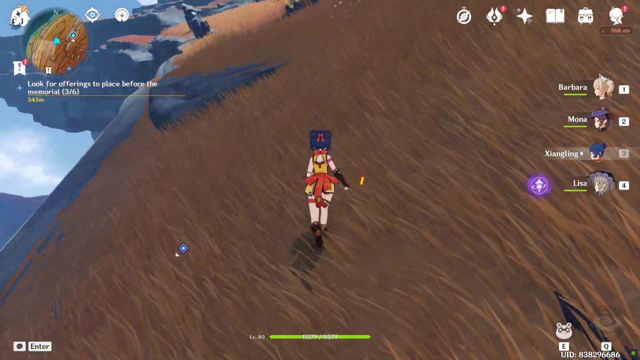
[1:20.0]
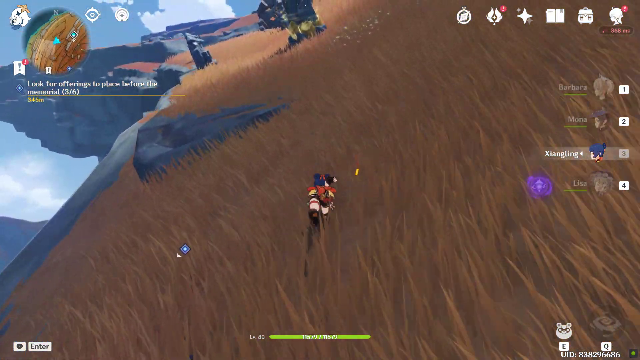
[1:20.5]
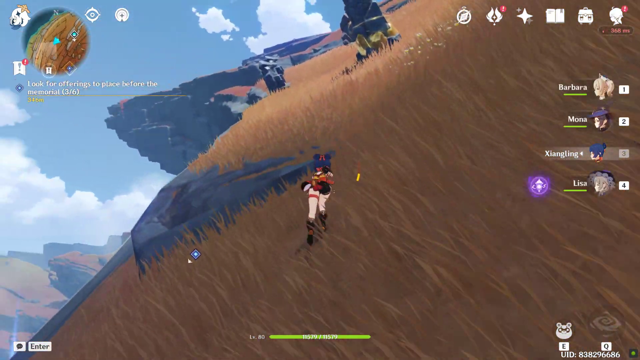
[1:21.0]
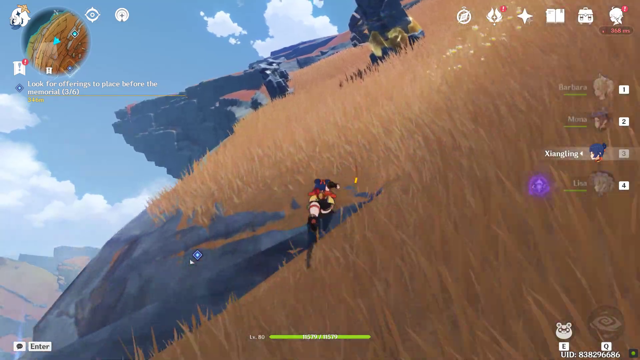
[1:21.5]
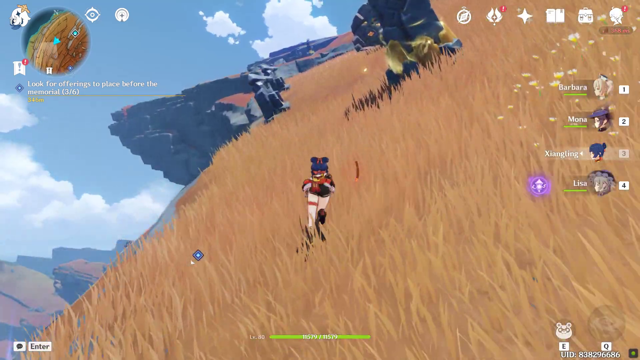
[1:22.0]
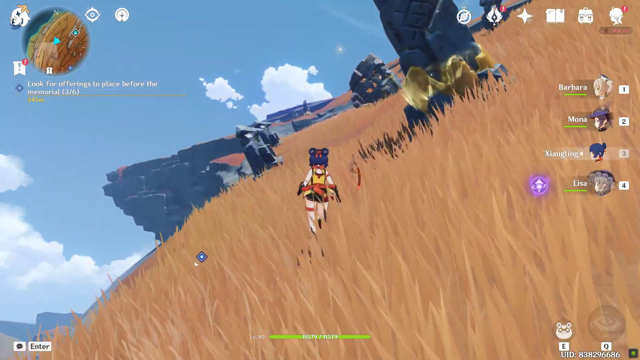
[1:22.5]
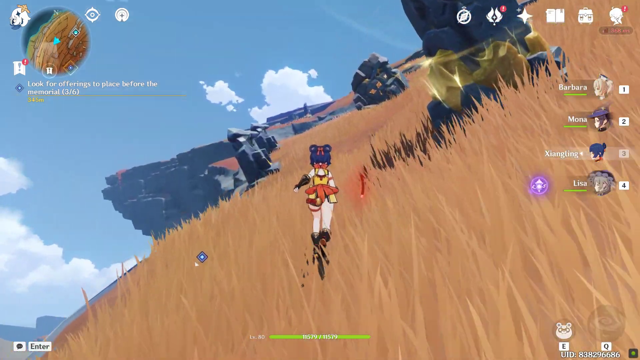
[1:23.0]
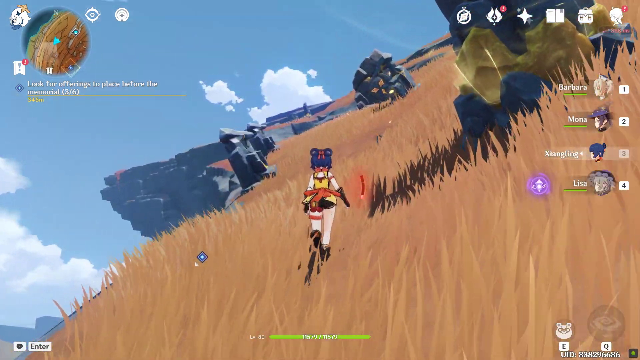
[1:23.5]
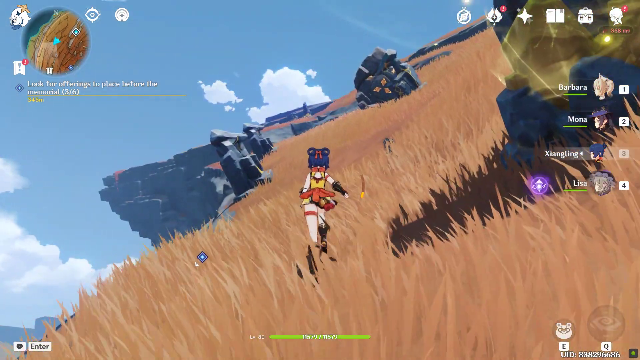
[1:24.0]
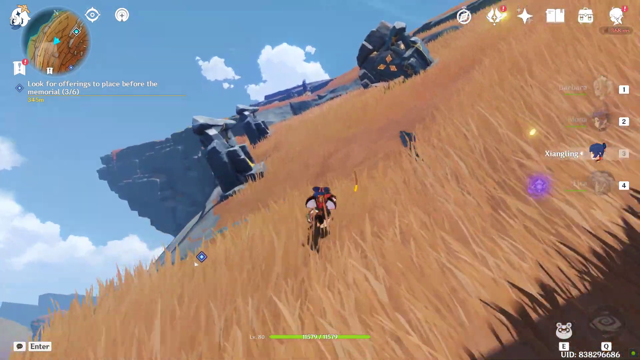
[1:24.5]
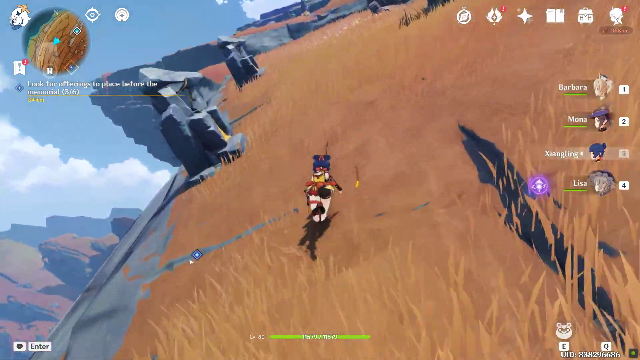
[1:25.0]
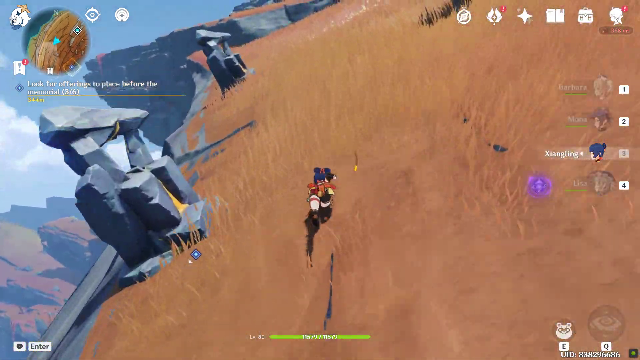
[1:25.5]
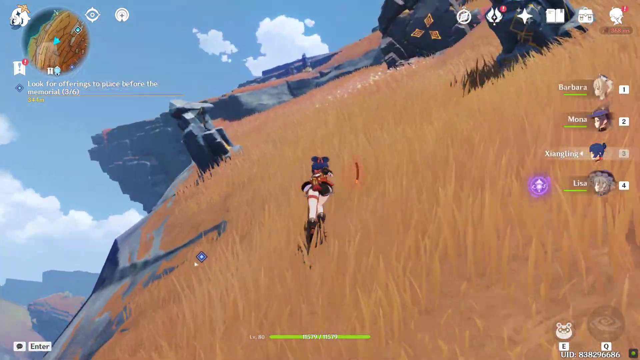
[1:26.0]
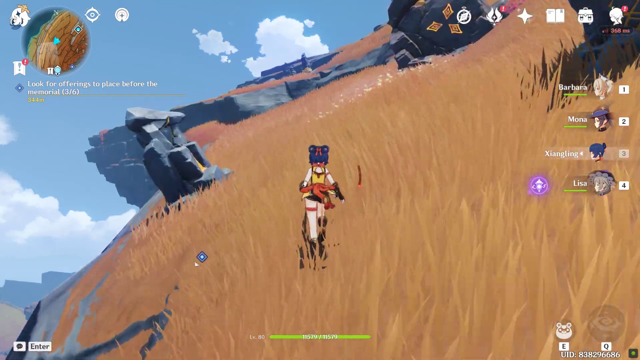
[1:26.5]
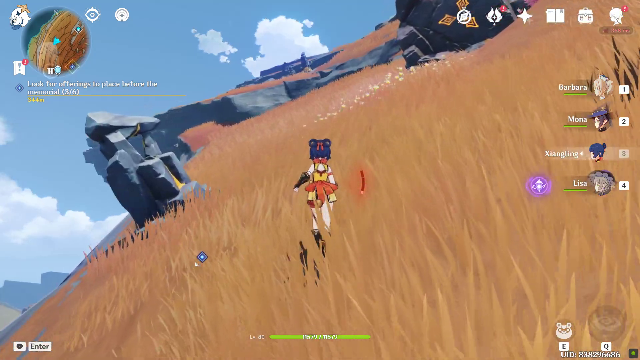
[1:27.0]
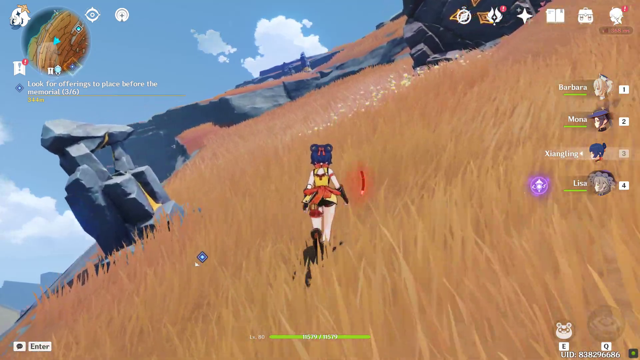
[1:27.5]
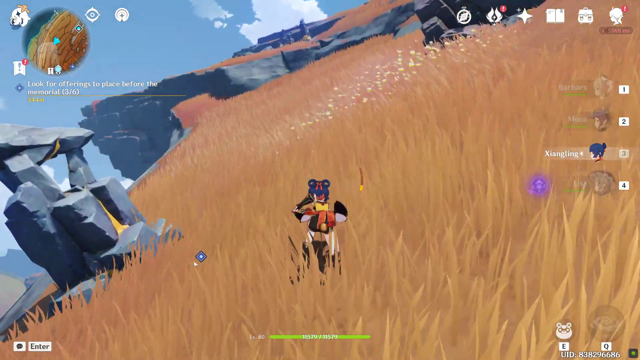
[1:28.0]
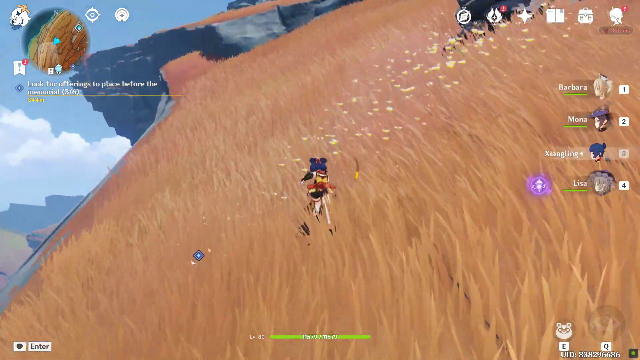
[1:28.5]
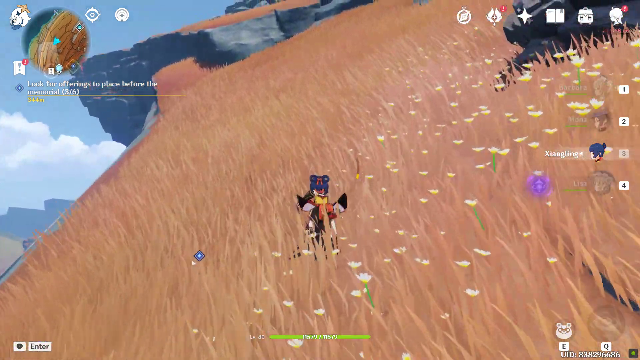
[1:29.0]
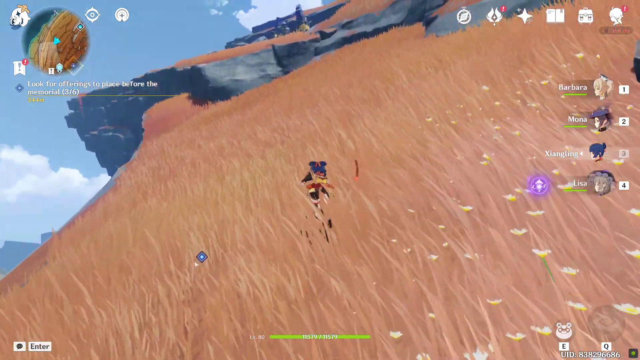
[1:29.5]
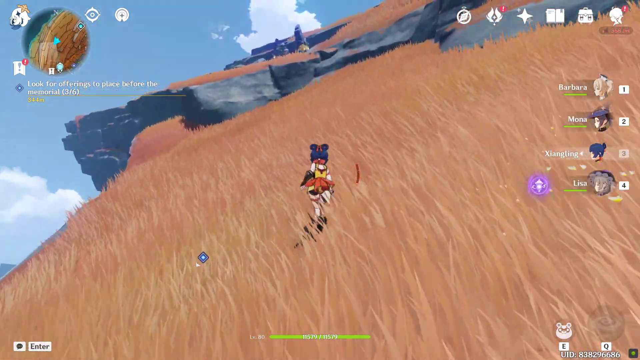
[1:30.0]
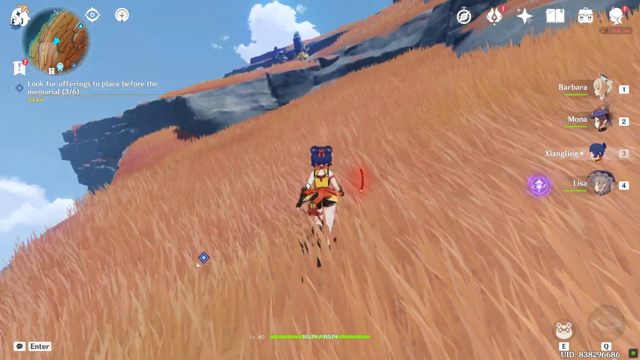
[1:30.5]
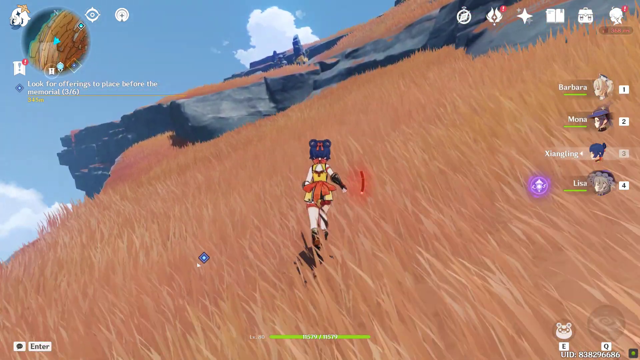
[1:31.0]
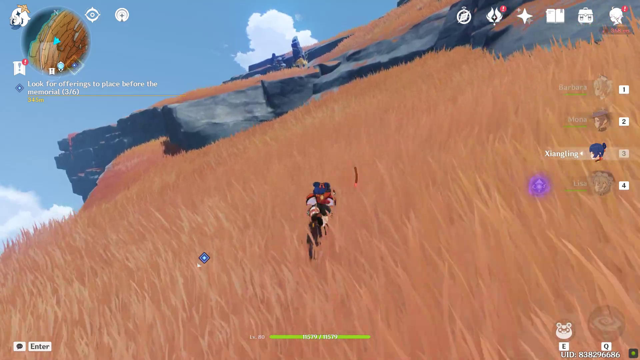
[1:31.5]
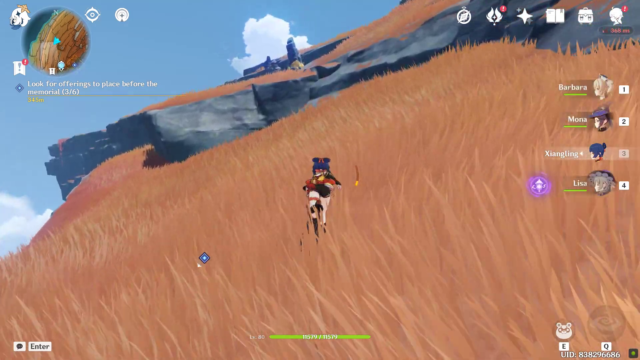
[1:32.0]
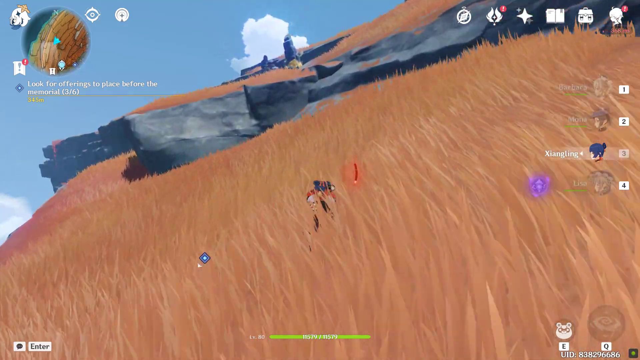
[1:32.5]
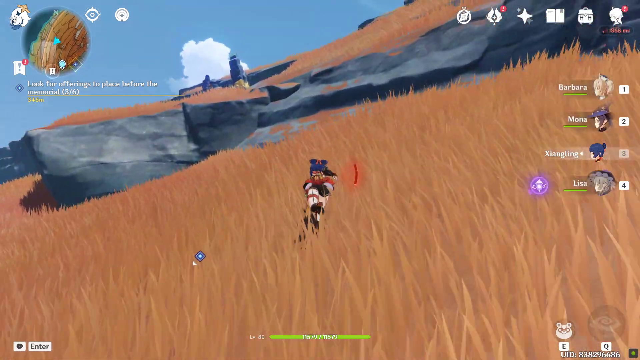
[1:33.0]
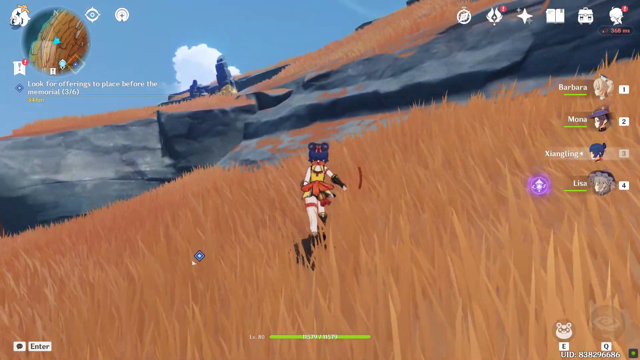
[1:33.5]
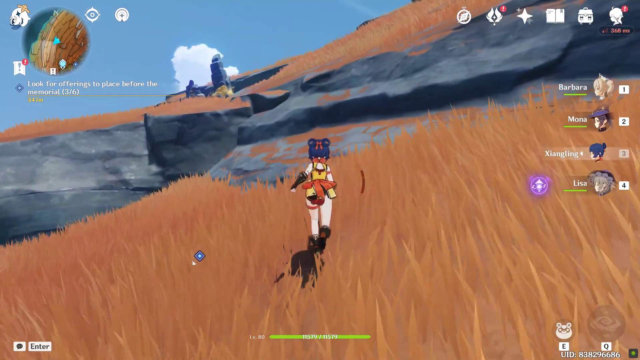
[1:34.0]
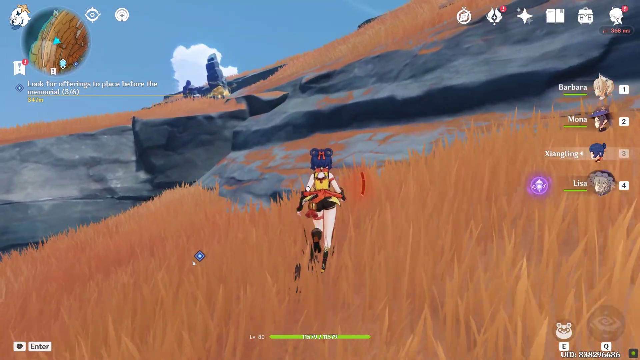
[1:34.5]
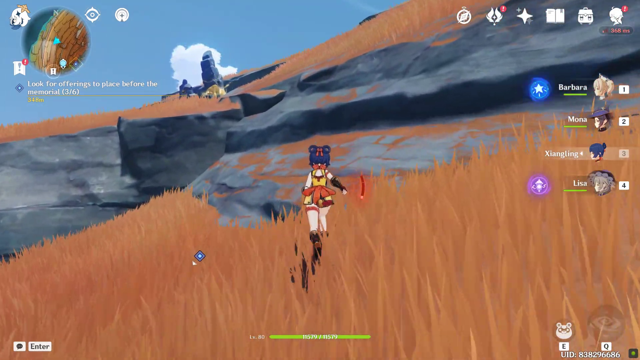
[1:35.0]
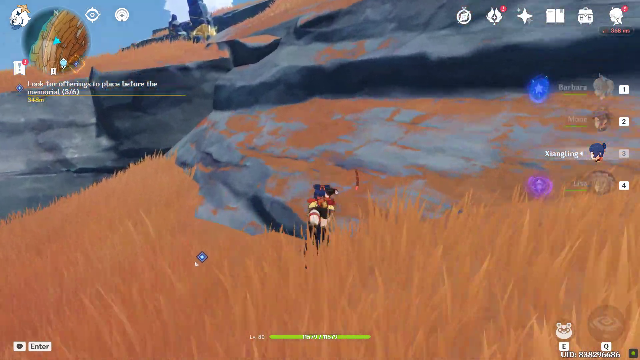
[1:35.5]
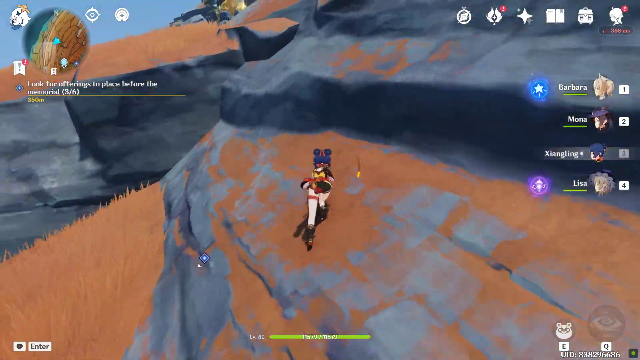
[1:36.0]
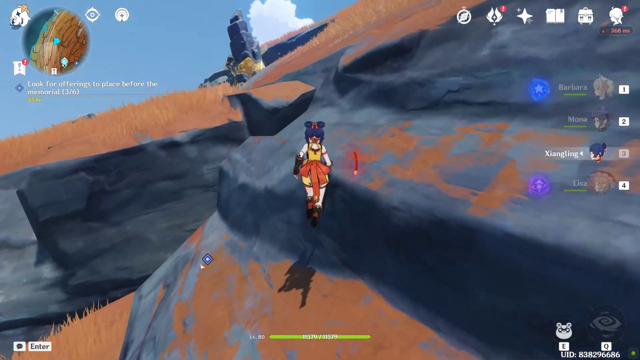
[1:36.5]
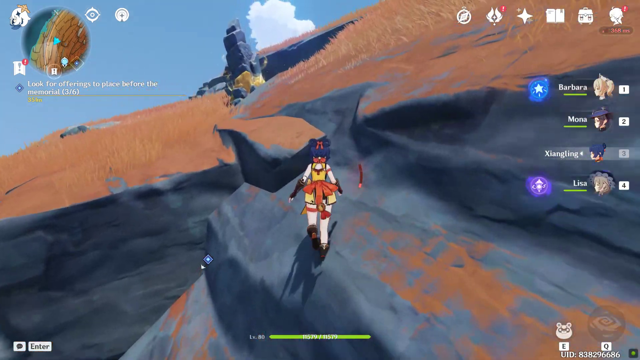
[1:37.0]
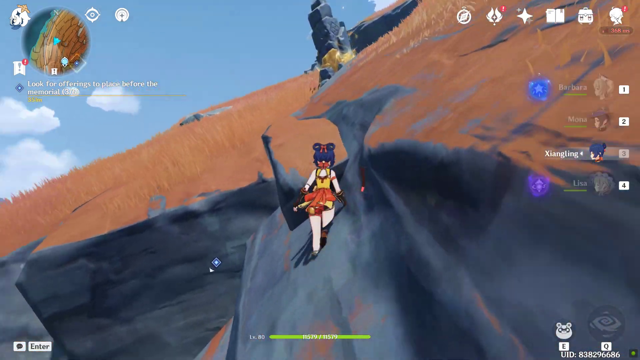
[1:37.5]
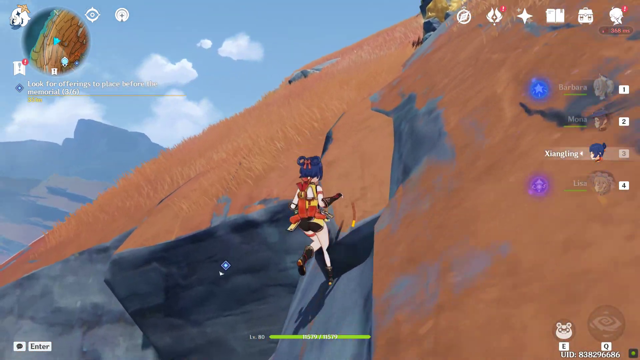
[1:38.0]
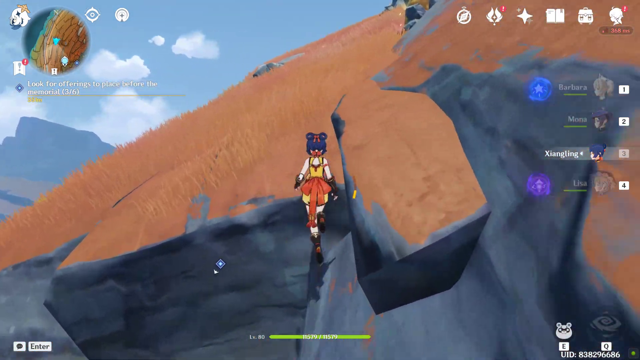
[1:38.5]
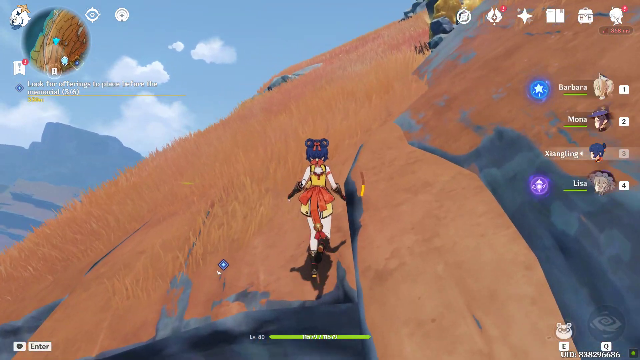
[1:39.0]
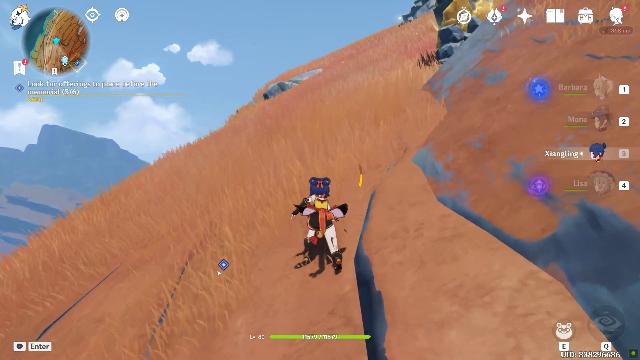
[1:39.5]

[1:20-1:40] The character is on the move again, right on the edge of a cliff. At the top left there is a circular picture that seems to be the map shown at the start, with small white text below it that is too small to read. She runs past fixtures that look deliberately built by people, resembling ports or altars made of stone. There are sometimes flowers in the grass as she runs, and there is a constant red stripe to her right. She runs with pauses between running that look like a hitch or glitch, and keeps running as the terrain changes to a more reddish-brown colour again. Little else happens besides her running.